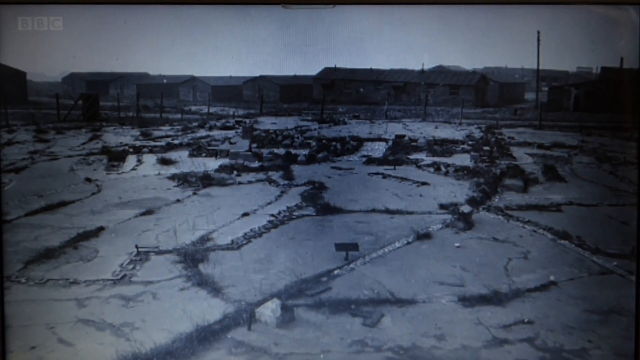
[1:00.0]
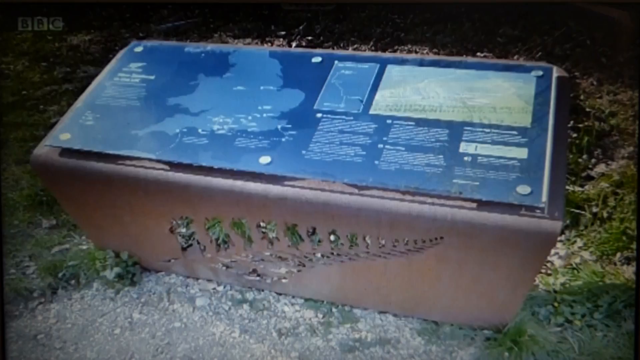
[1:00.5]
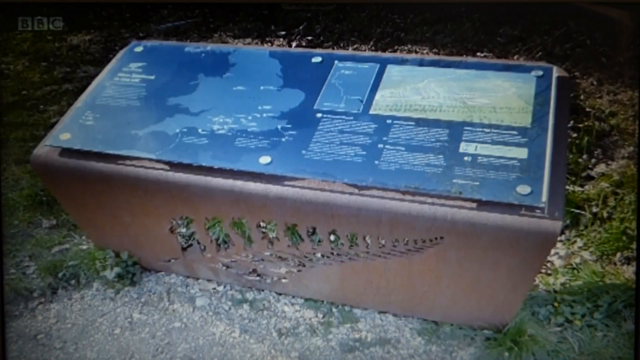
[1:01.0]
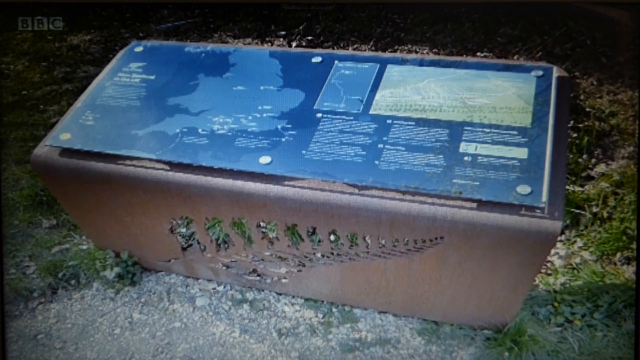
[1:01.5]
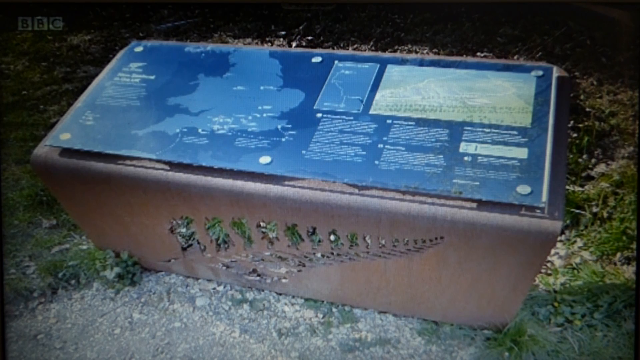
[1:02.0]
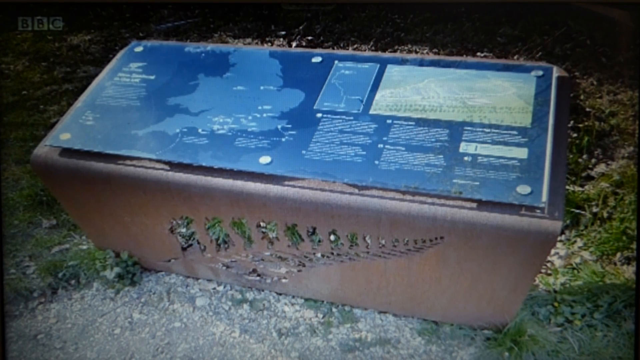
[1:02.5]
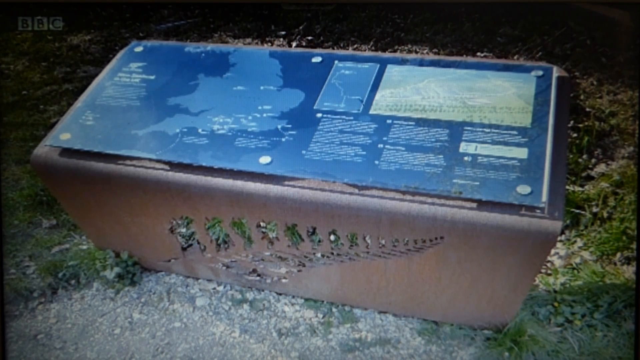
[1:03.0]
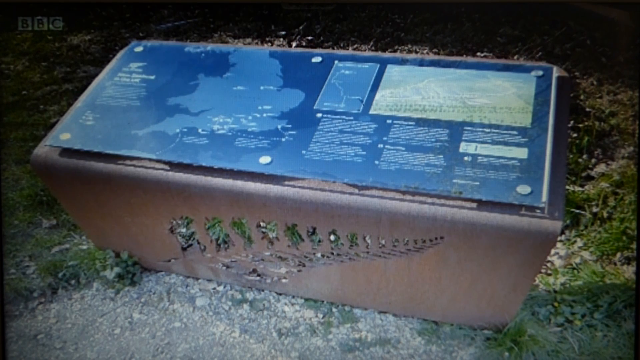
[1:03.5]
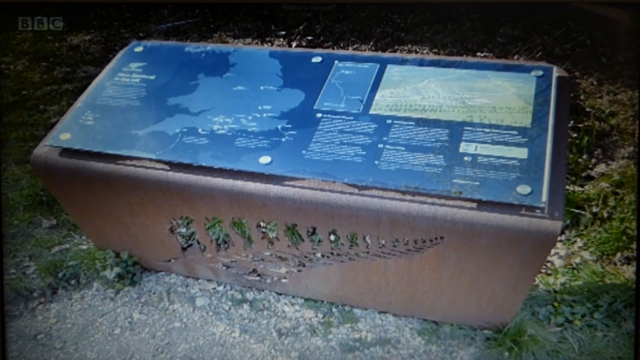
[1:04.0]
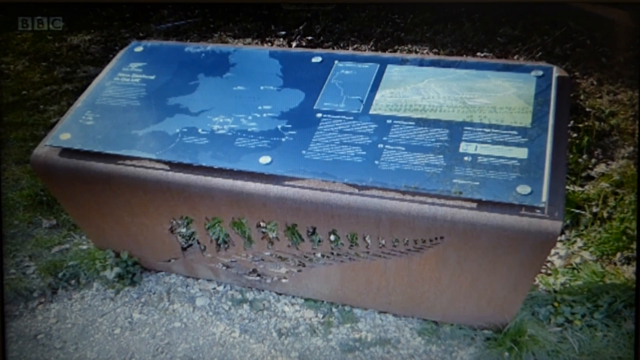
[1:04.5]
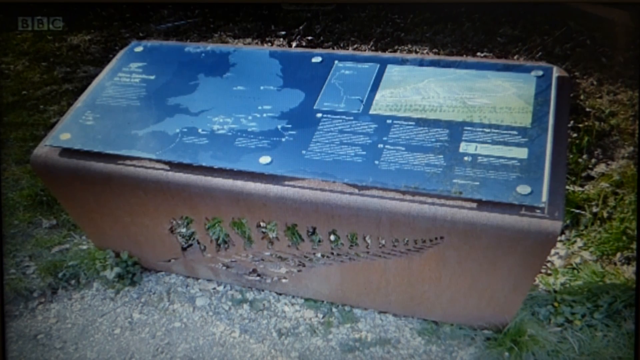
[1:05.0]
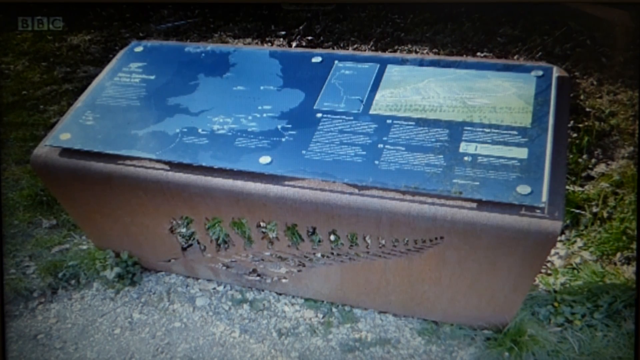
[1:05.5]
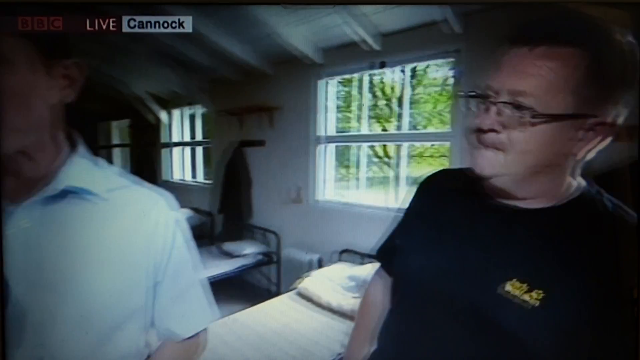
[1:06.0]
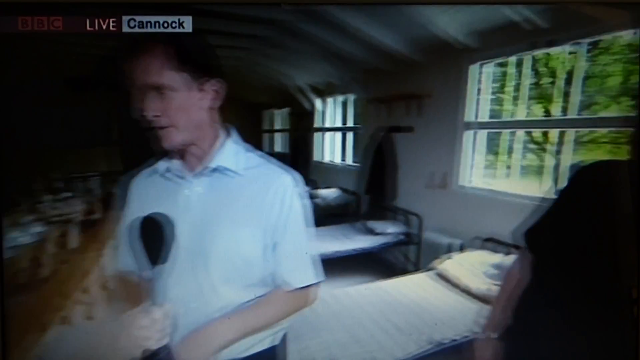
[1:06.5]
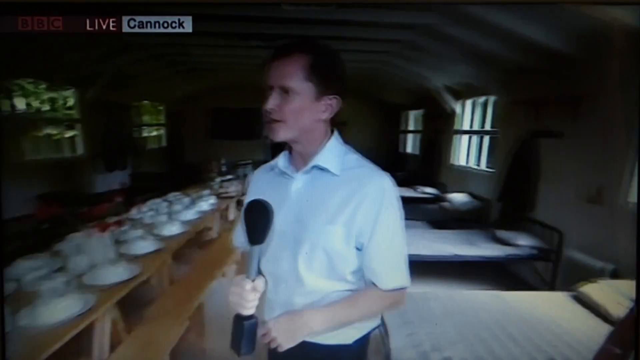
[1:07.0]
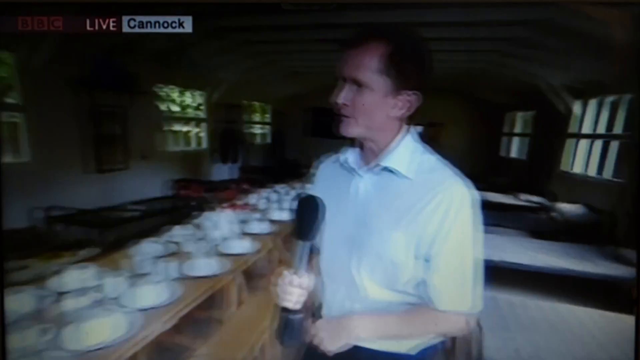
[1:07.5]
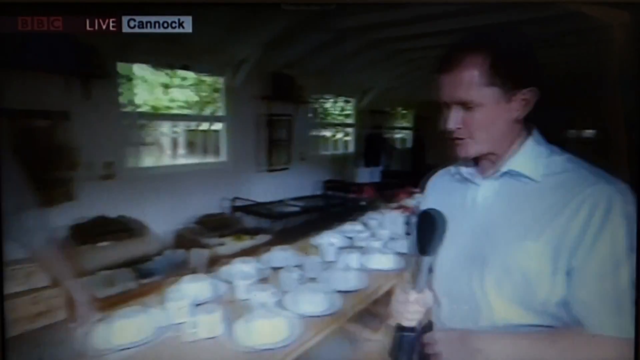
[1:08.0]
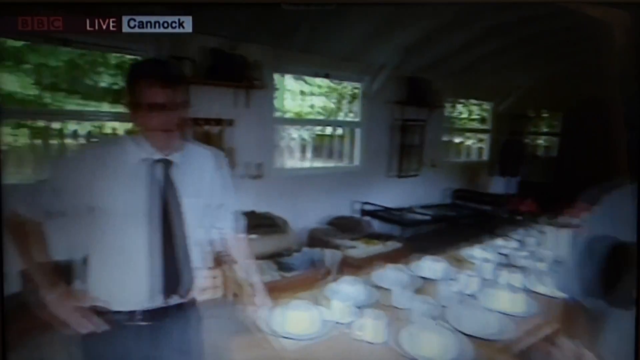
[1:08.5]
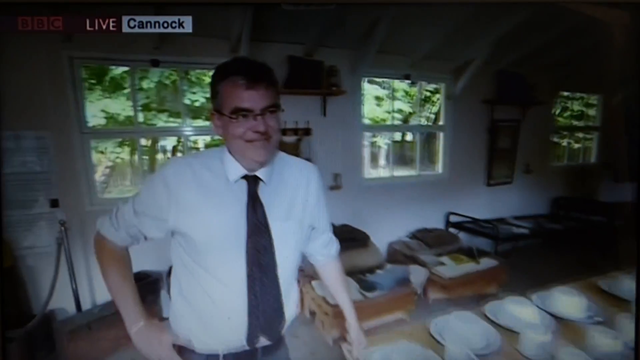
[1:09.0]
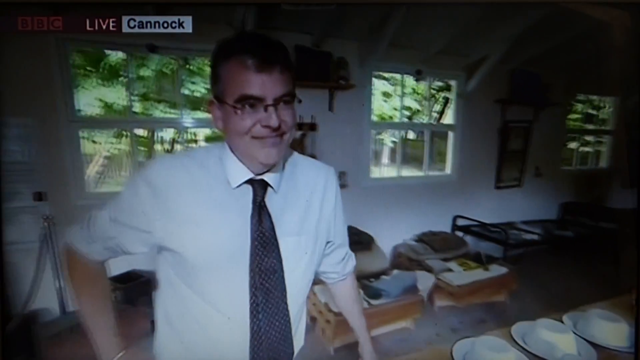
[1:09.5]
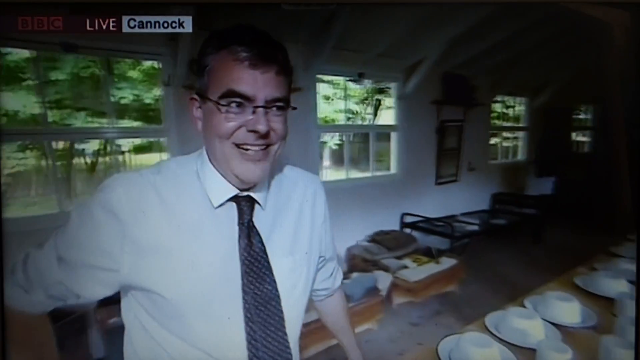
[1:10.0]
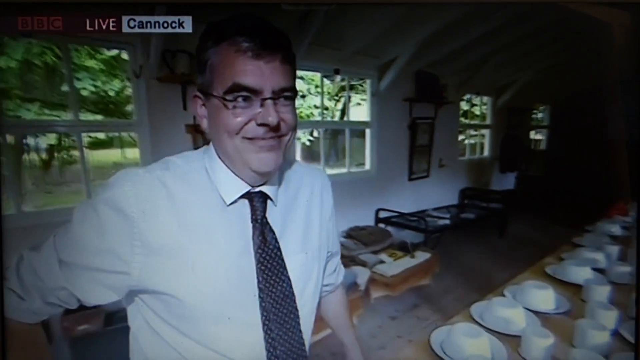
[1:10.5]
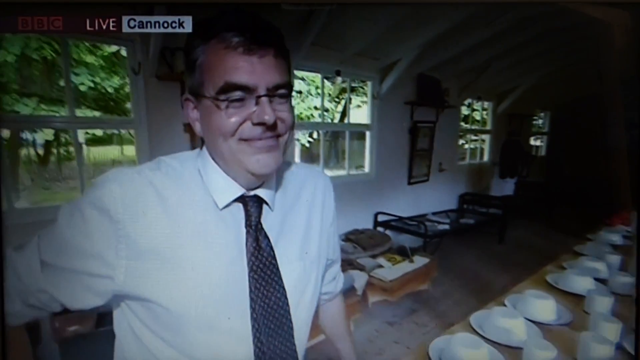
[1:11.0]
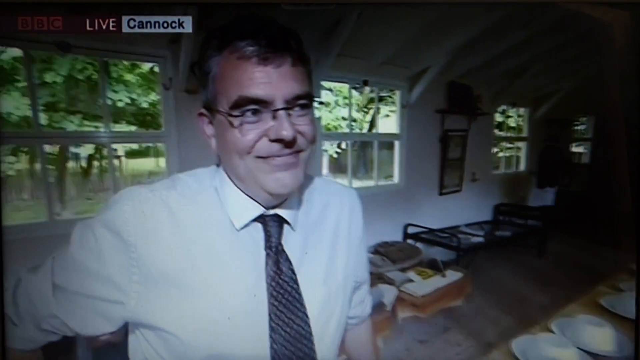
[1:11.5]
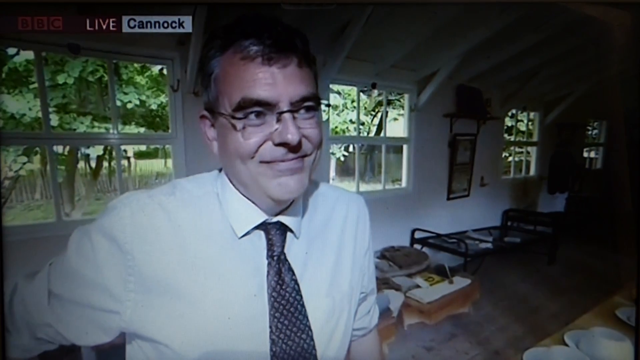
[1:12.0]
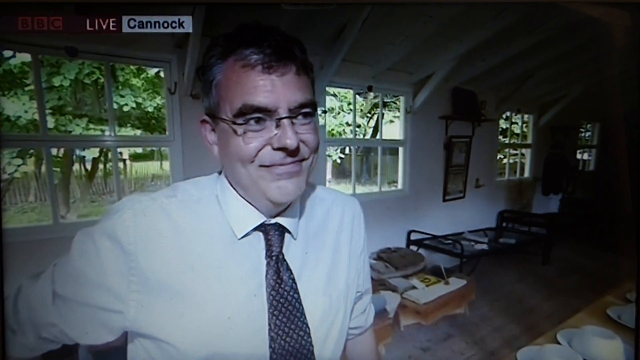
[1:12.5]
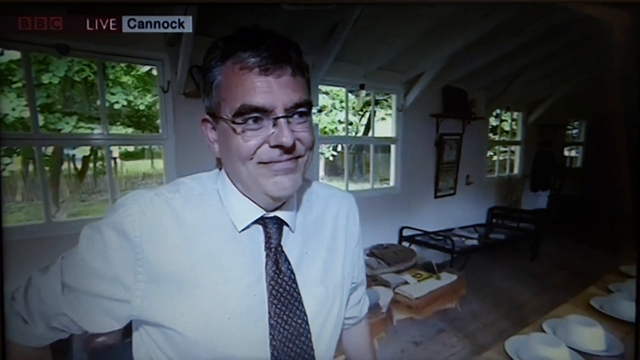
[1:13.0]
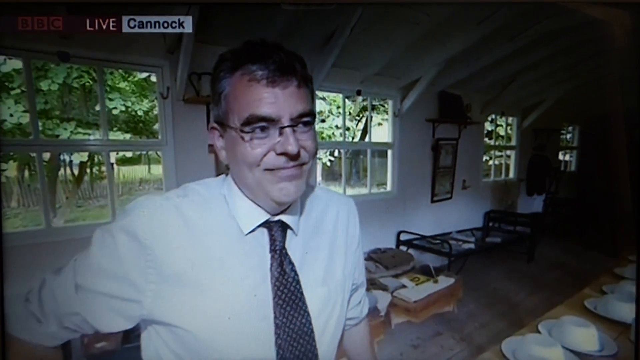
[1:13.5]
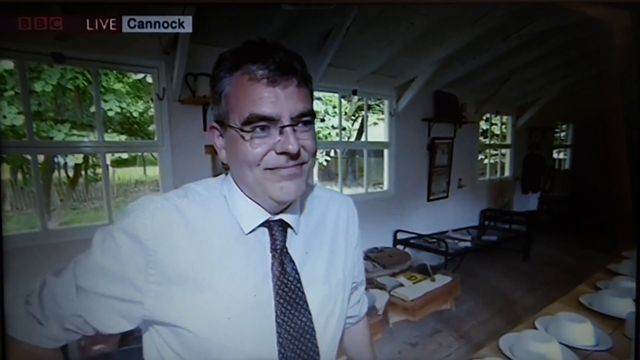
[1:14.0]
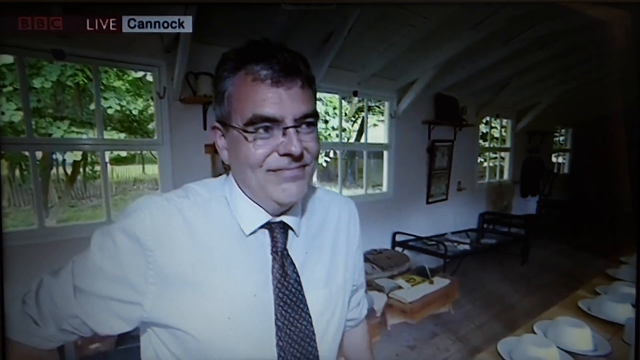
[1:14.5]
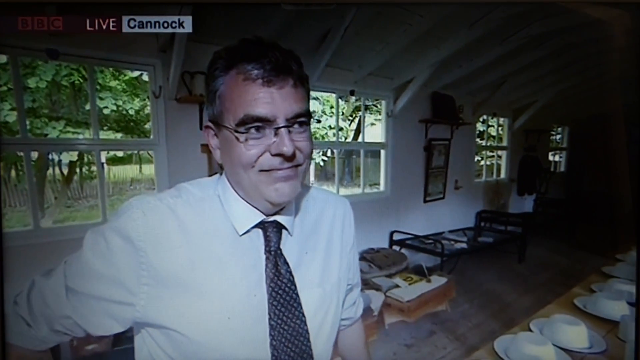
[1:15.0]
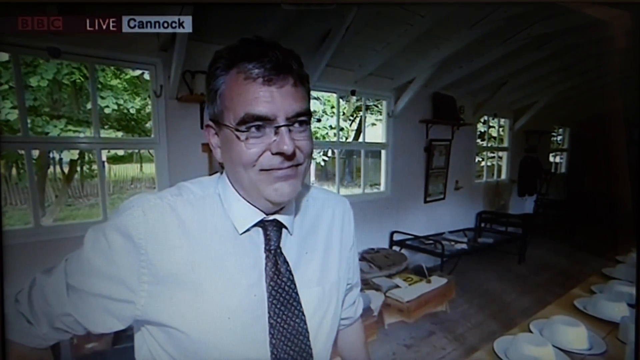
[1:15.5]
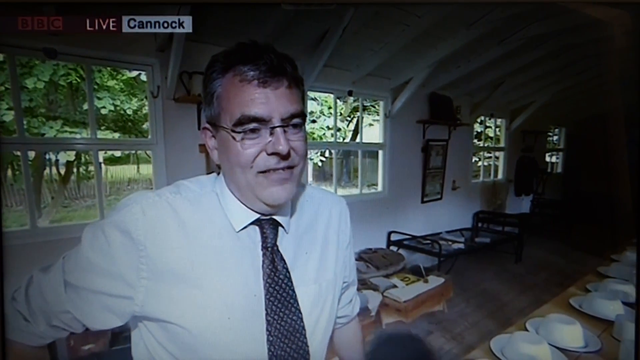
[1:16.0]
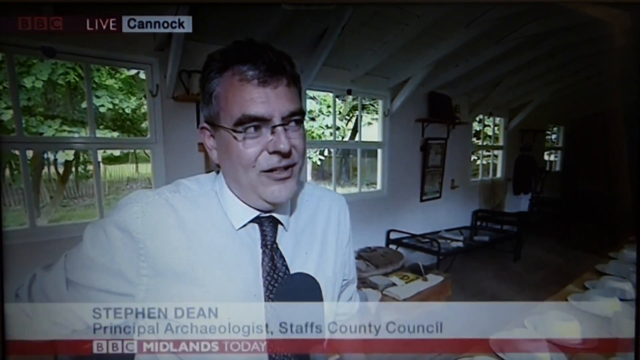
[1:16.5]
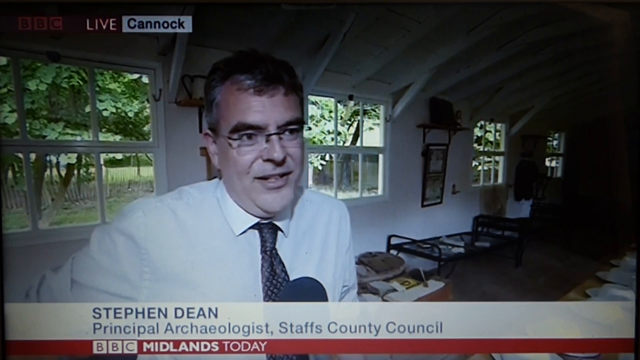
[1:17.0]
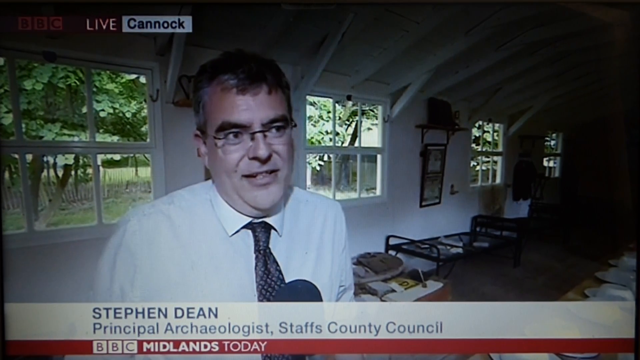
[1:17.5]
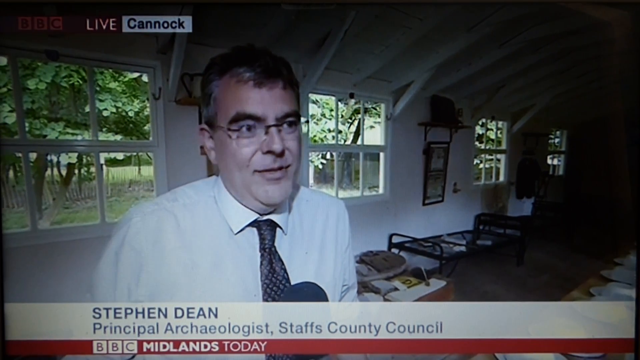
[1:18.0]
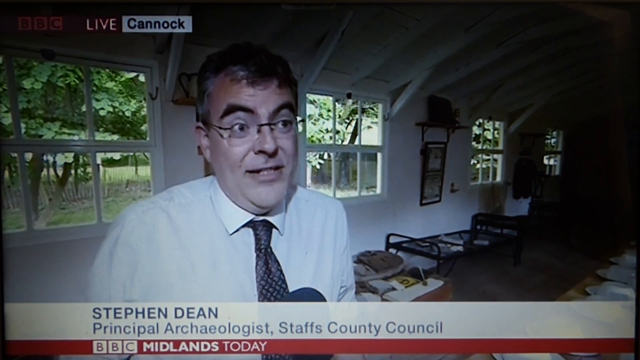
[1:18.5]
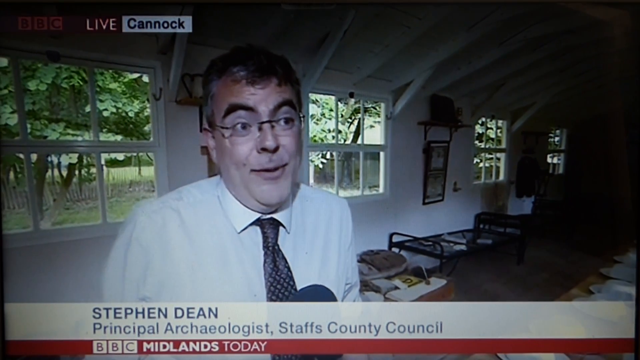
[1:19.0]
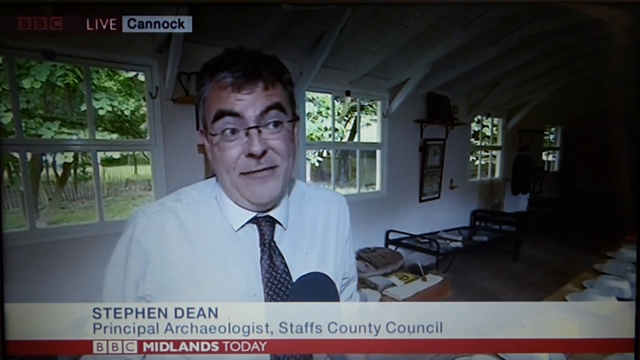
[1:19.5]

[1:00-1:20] The place appears to be a museum or heritage site. An old black-and-white picture shows soil in poor condition, possibly from the after effects of the war. There seems to be a box of some sort showing a map, maybe of a country, with points marked on it.